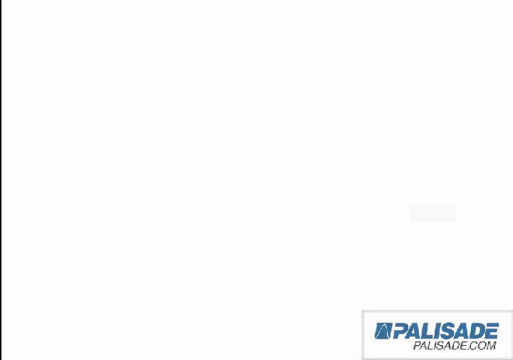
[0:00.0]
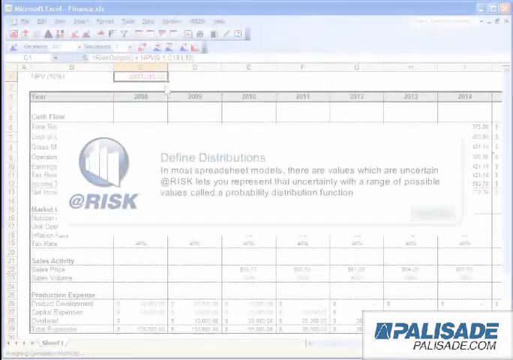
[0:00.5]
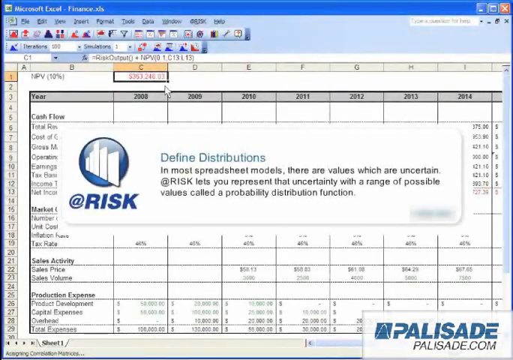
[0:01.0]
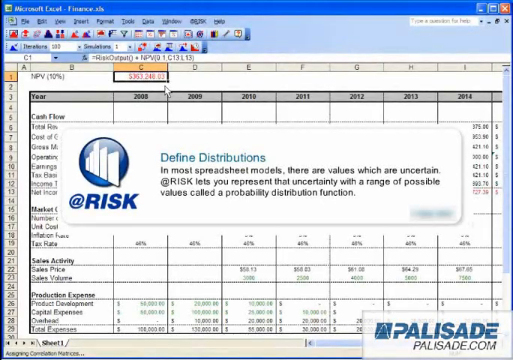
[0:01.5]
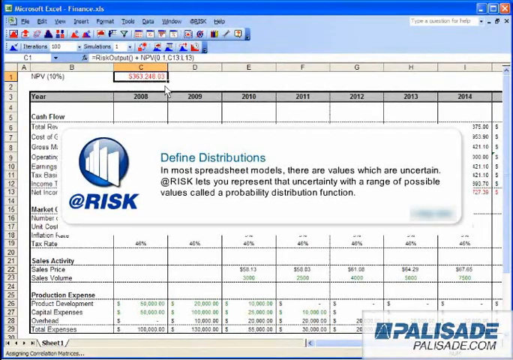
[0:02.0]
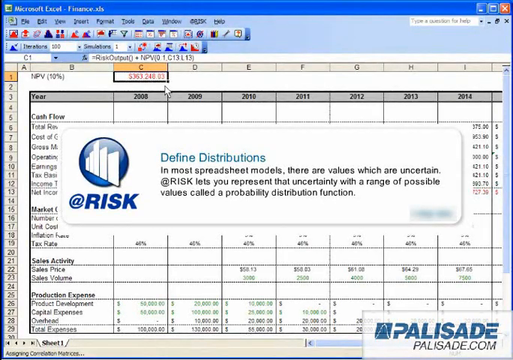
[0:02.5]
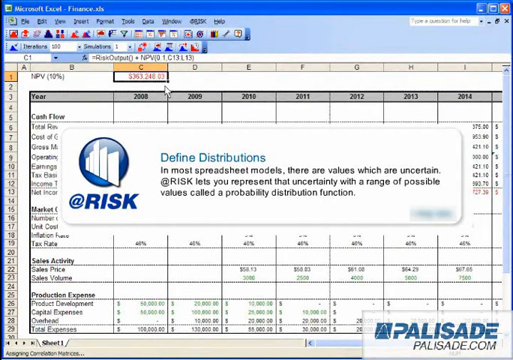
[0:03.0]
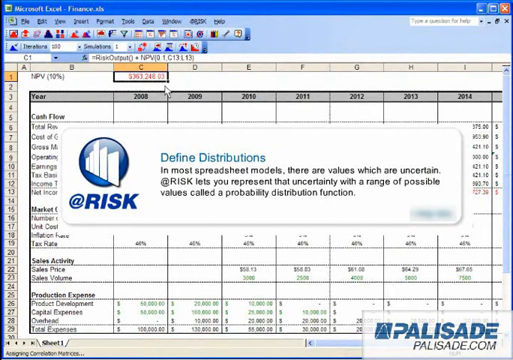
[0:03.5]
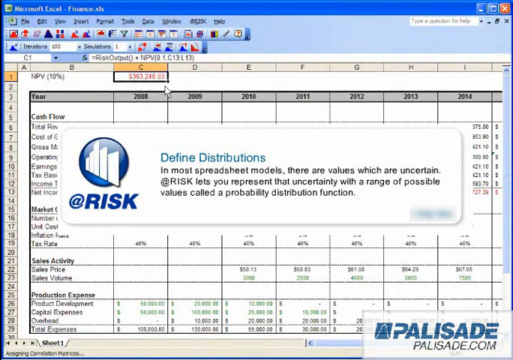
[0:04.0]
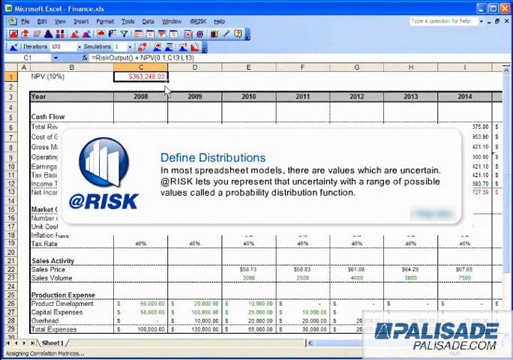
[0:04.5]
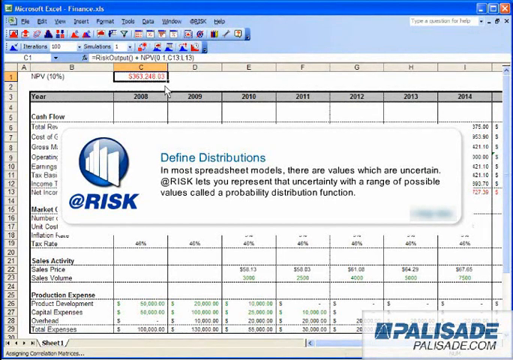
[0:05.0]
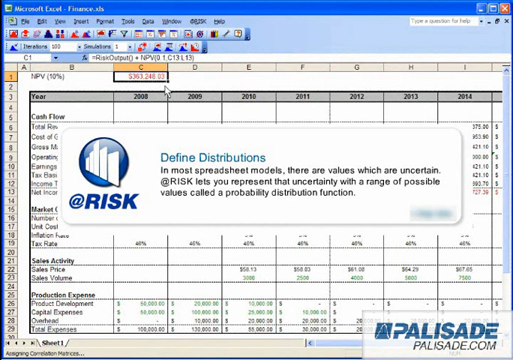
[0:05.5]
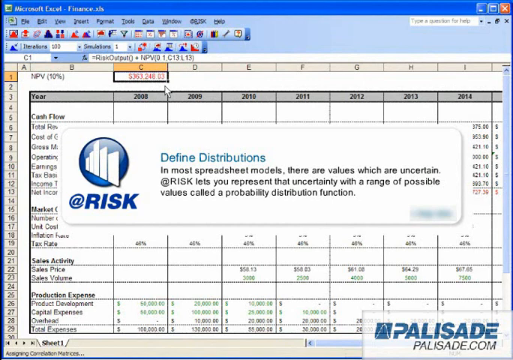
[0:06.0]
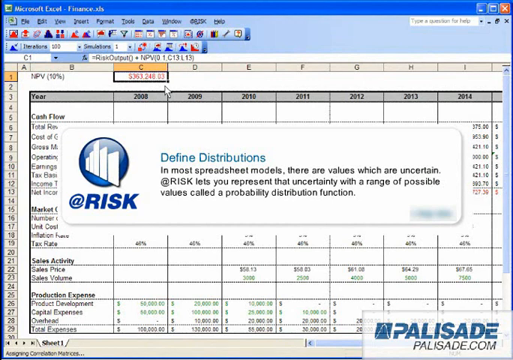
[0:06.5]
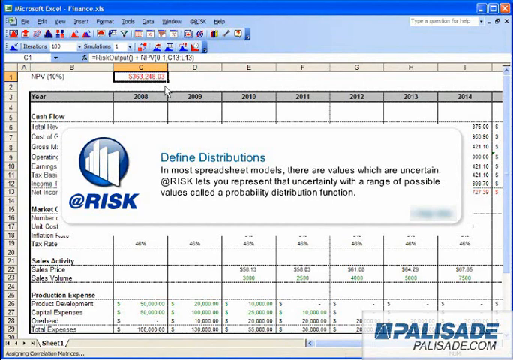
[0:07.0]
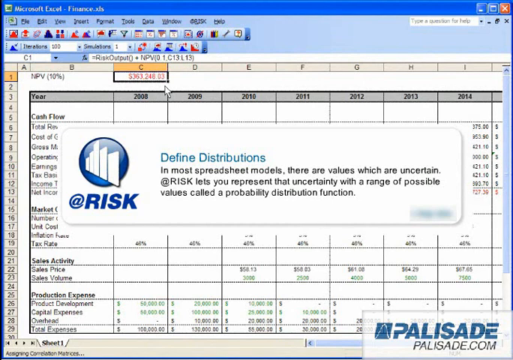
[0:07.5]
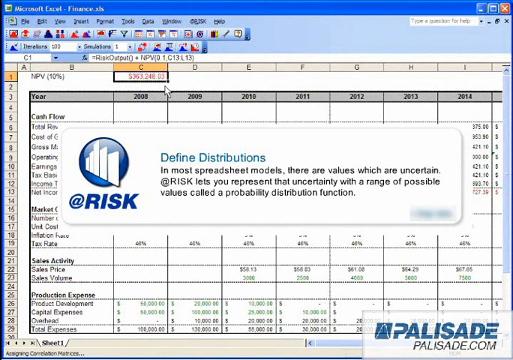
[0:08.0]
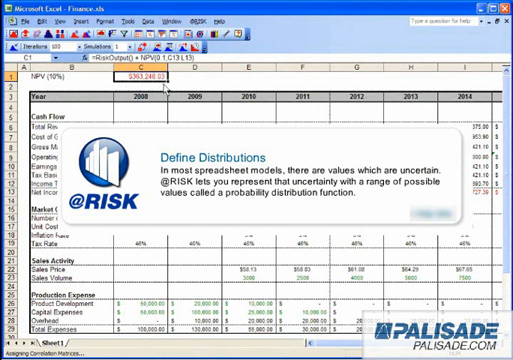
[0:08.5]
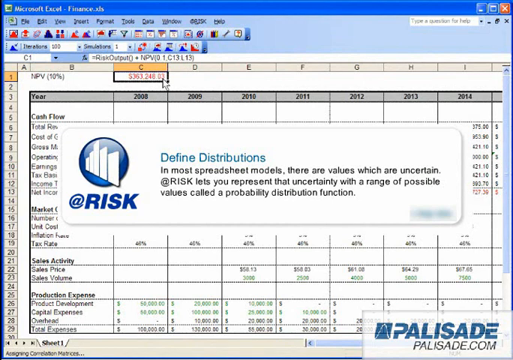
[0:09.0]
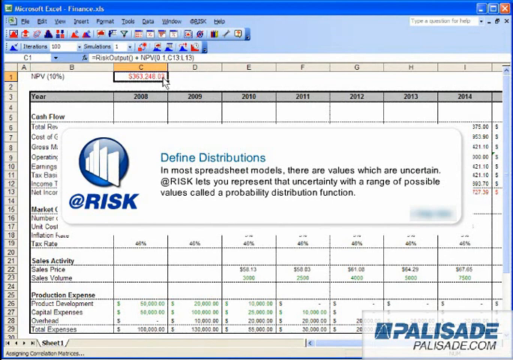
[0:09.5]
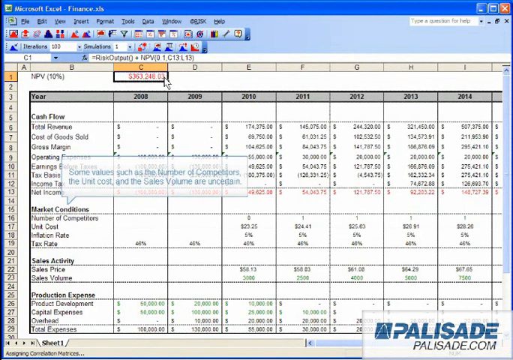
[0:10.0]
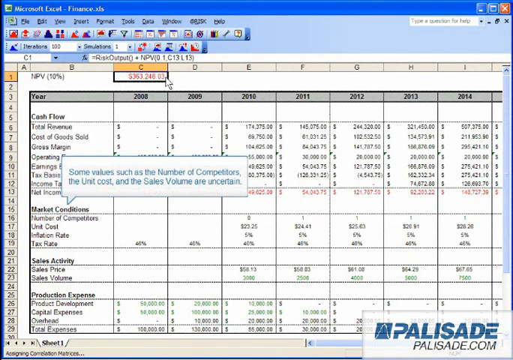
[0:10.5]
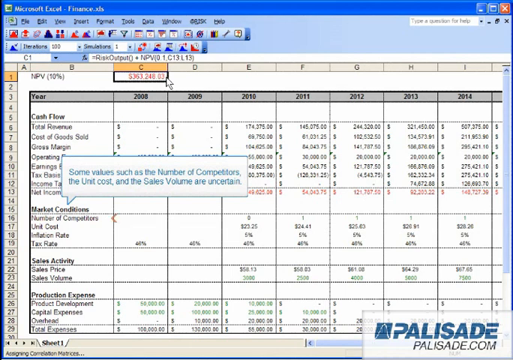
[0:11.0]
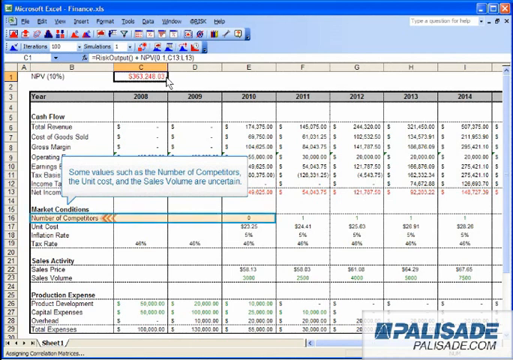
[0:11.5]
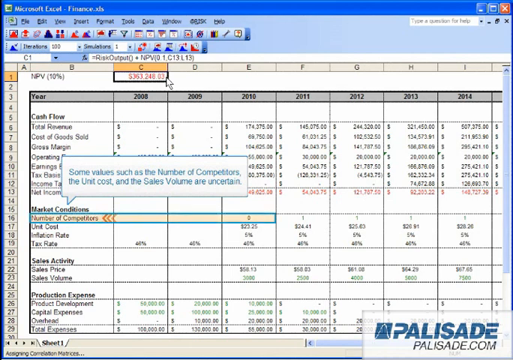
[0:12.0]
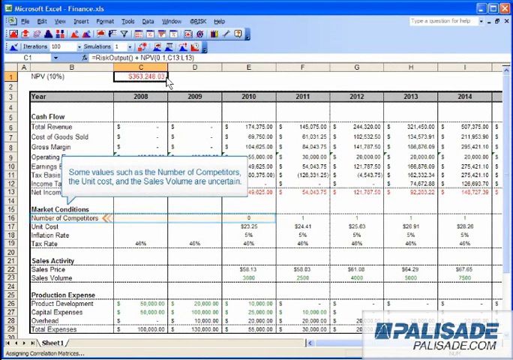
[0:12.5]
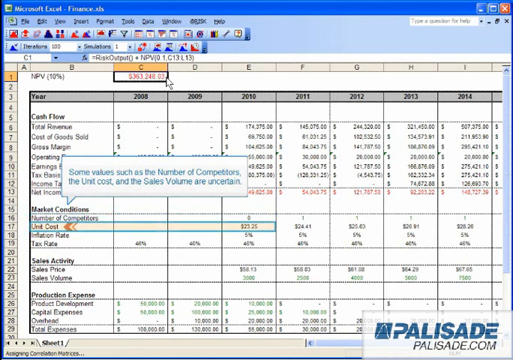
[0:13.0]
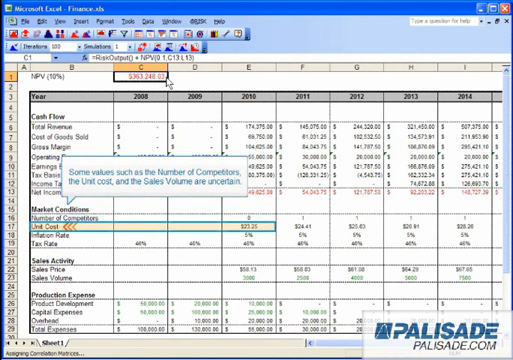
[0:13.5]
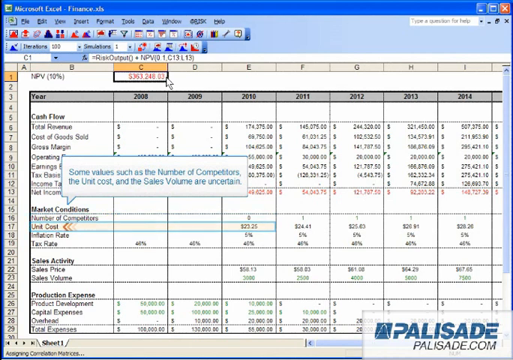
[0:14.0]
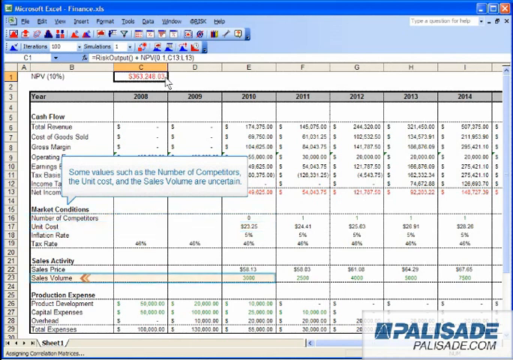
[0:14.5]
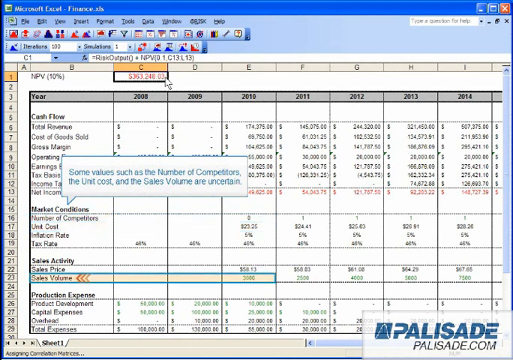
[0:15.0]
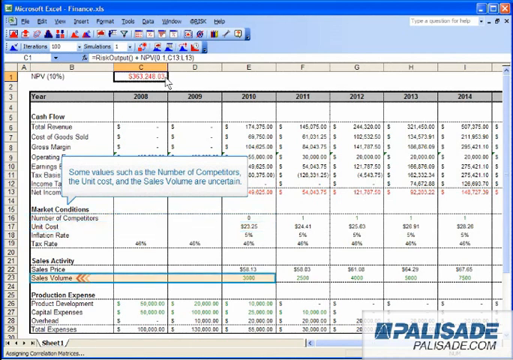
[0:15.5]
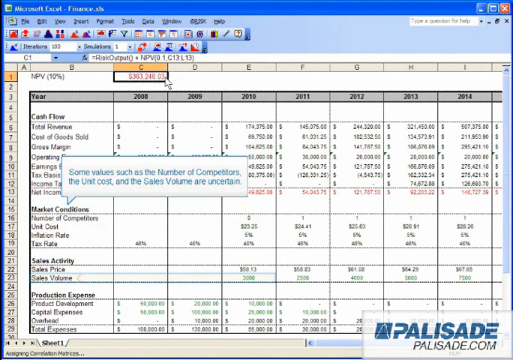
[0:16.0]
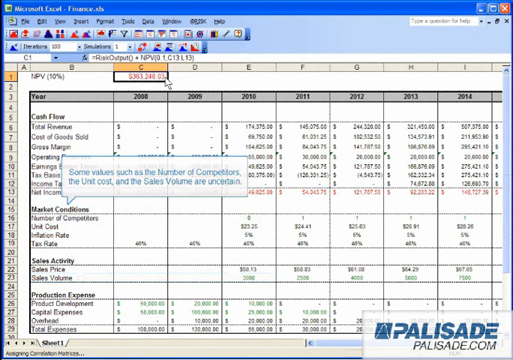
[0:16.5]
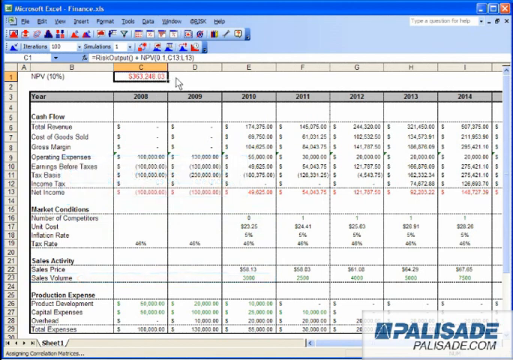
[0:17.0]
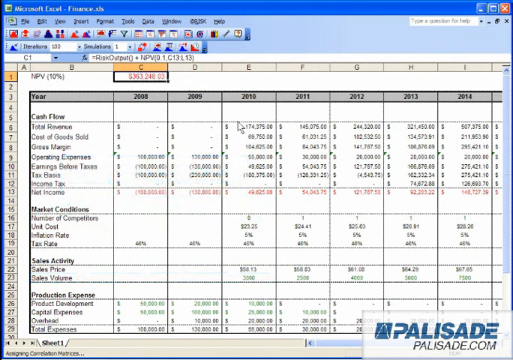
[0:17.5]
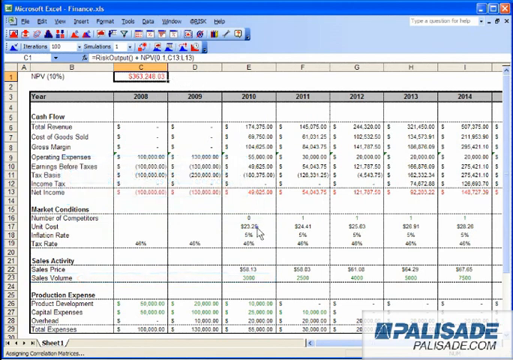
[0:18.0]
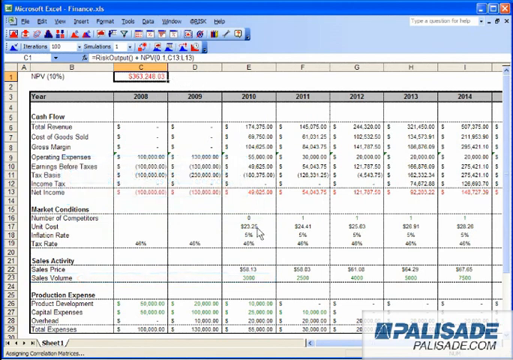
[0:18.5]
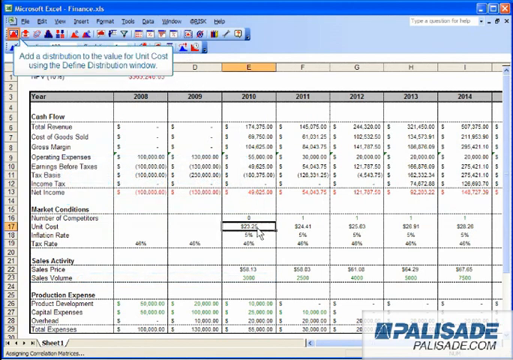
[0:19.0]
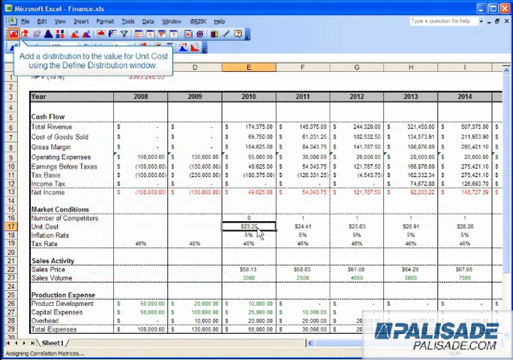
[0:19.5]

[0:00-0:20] A computer screen recording shows Microsoft Excel, identifiable by the blue tab at the top. A white rectangular banner overlays the window. It has a small logo, a blue circle with white bars, and under it the text "AT RISK", then "Define Distributions" and "In most spreadsheet models there are values which are uncertain. AT RISK lets you represent that uncertainty with a range of possible values called a probability distribution function." An Excel spreadsheet is in the background, with years from 2008 to 2014 across the top and rows such as cash flow, total revenue and net income. The banner blocks several more rows. Other labels include market cost, unit cost, inflation and tax rate, with the tax rate staying around the 40% range. Further labels read sales activity, sales price, sales volume, production expense, product development, capital expenses and total expenses. In the bottom right corner is a gray rectangular box with a logo and the word "Palisade". The regular Excel buttons are at the top, and the file is called finance.xls. Briefly, more of the spreadsheet becomes visible. A box points to market conditions and reads "some values such as number of competitors, the unit cost, inflation, and the sales volume are uncertain." Apart from the banner, the screen stays the same. The mouse then moves over and clicks on a number.